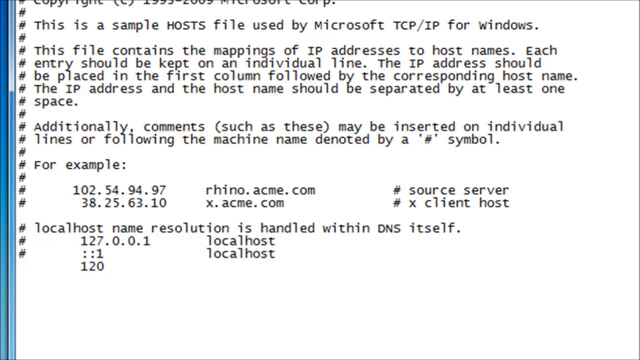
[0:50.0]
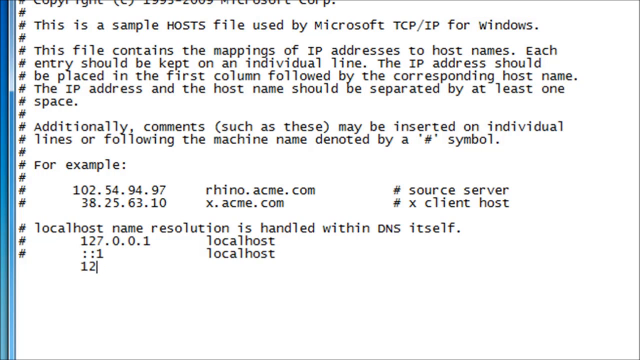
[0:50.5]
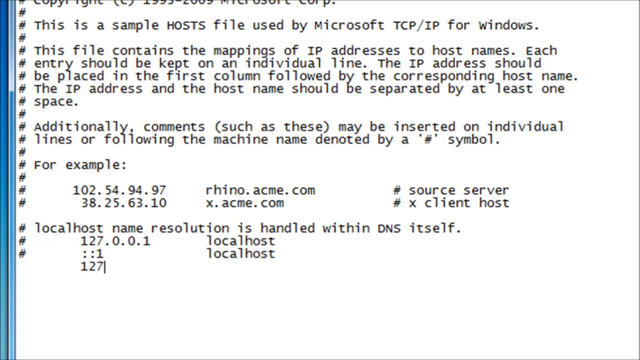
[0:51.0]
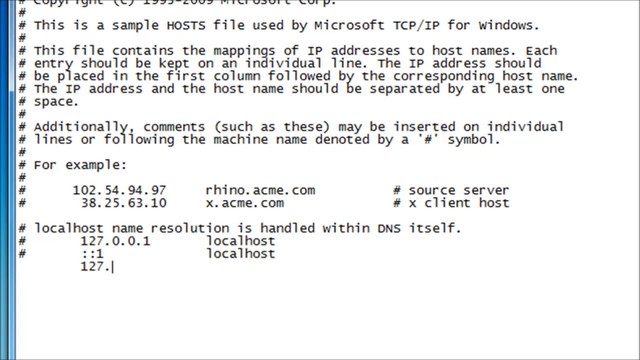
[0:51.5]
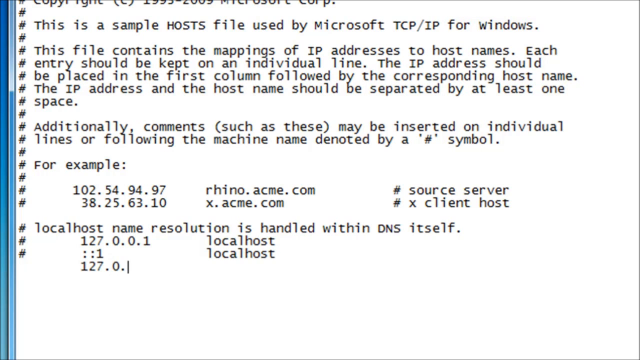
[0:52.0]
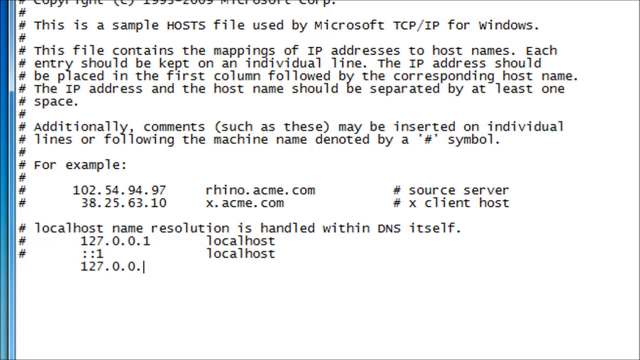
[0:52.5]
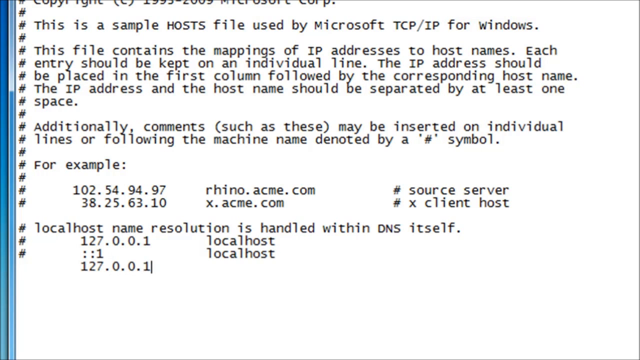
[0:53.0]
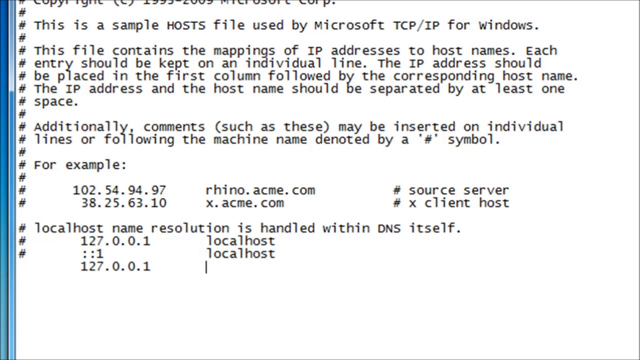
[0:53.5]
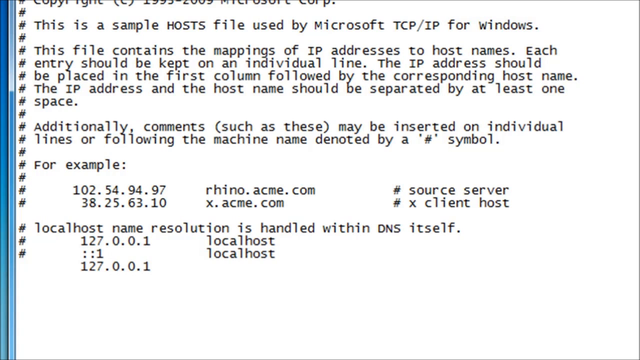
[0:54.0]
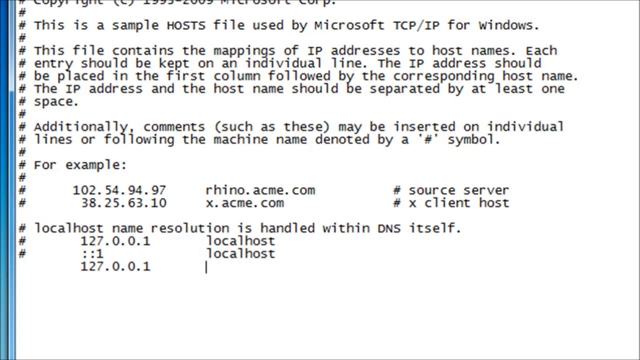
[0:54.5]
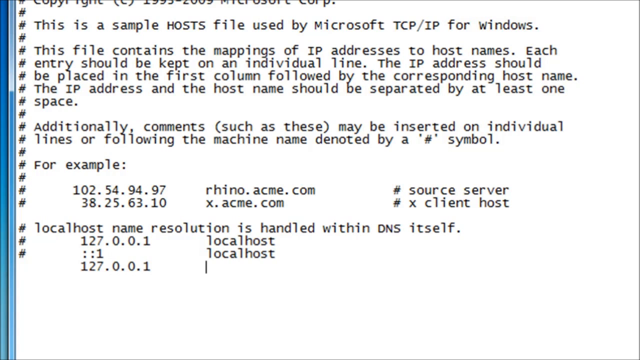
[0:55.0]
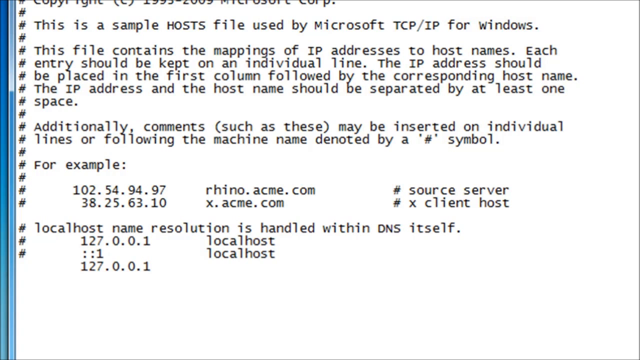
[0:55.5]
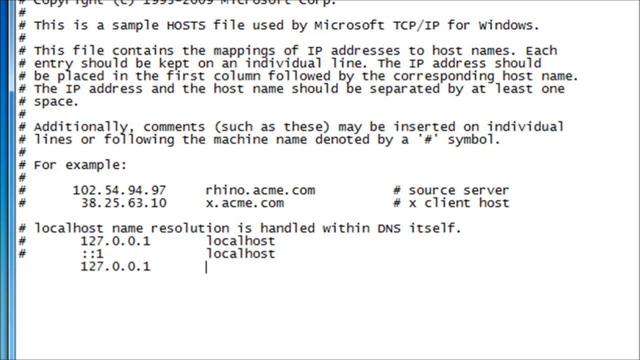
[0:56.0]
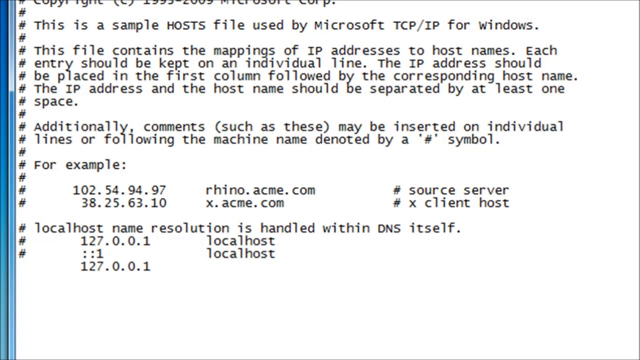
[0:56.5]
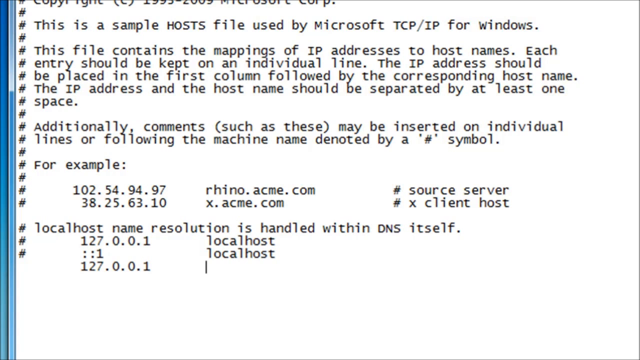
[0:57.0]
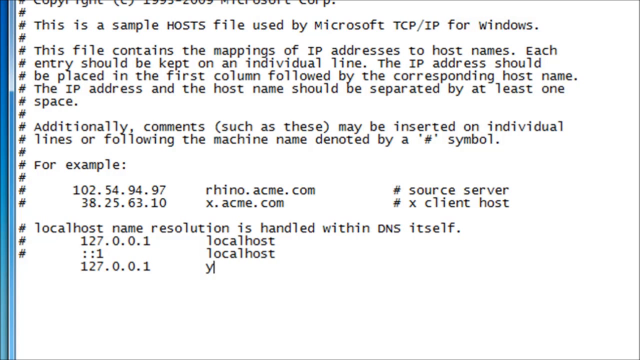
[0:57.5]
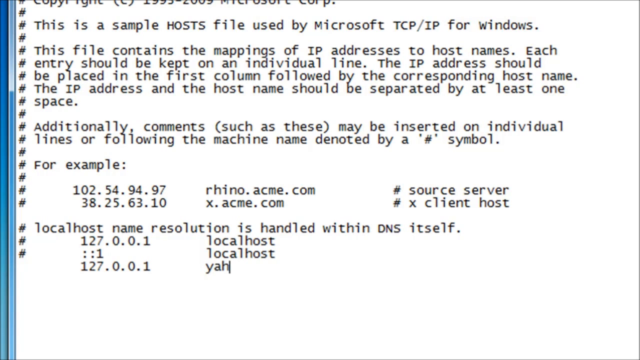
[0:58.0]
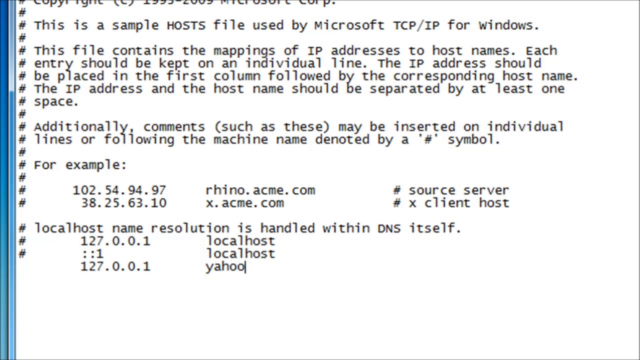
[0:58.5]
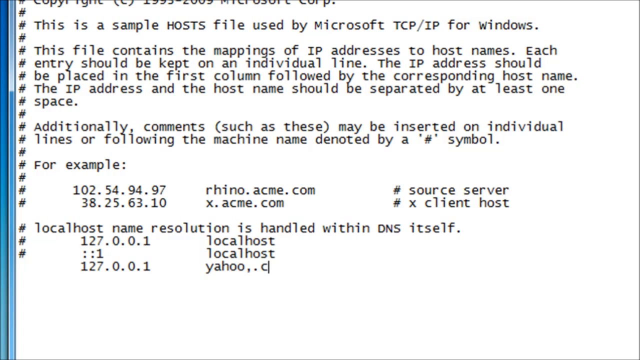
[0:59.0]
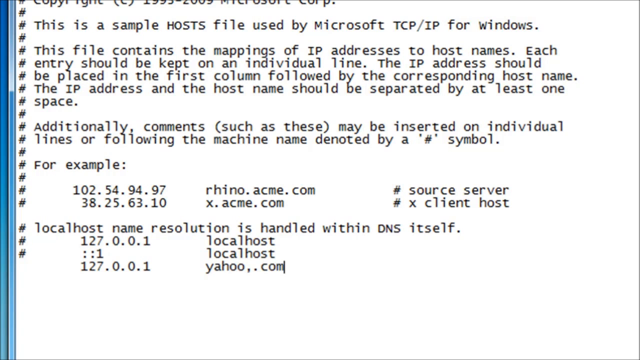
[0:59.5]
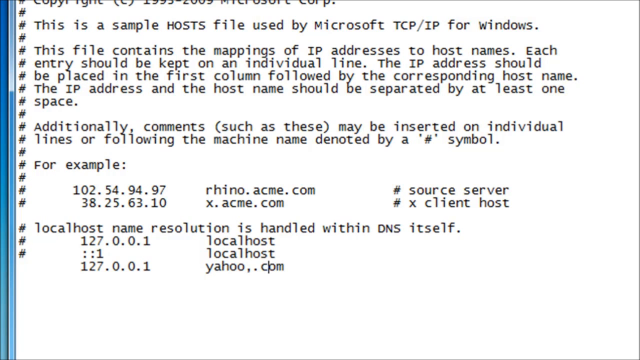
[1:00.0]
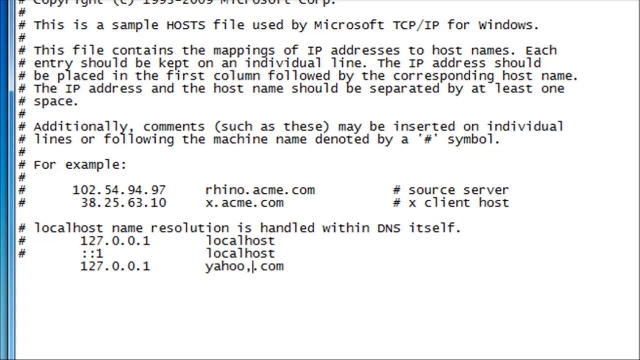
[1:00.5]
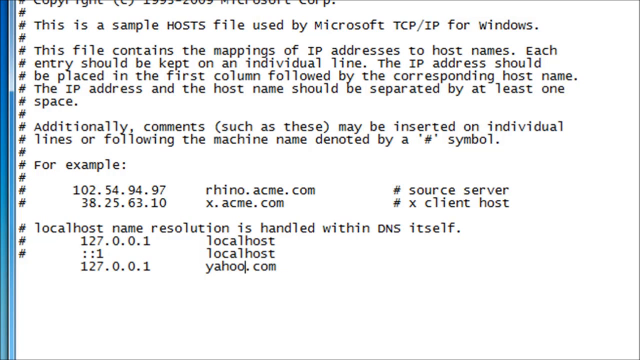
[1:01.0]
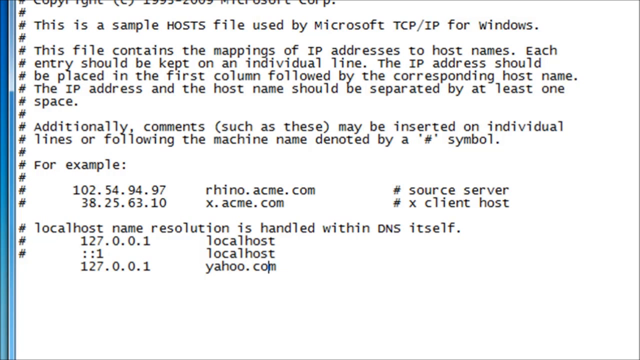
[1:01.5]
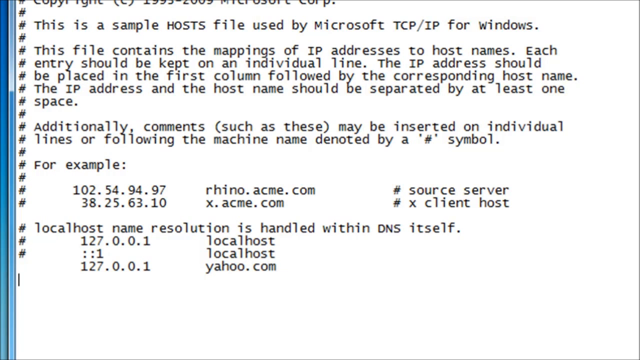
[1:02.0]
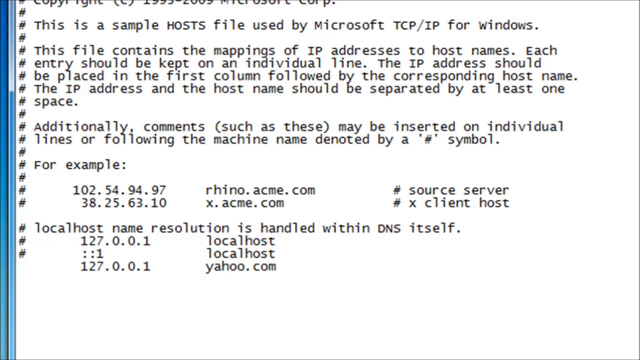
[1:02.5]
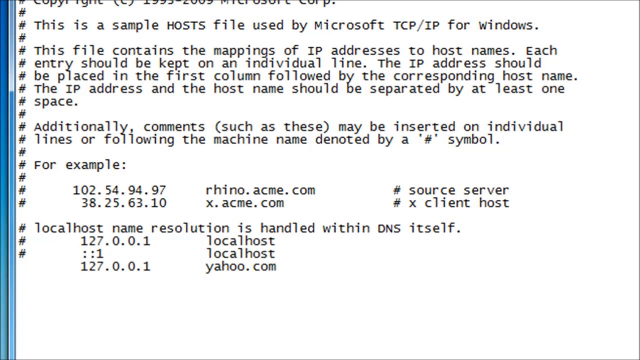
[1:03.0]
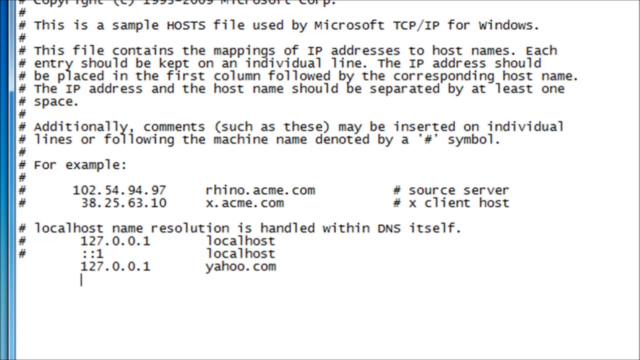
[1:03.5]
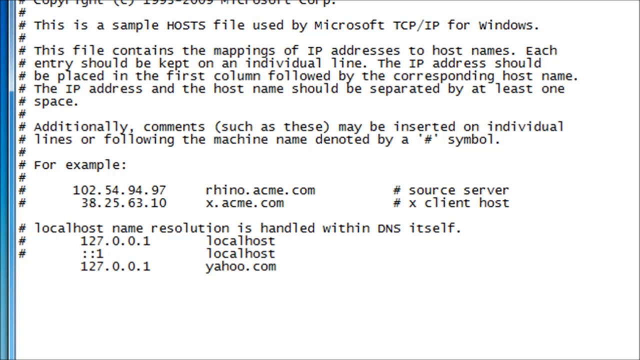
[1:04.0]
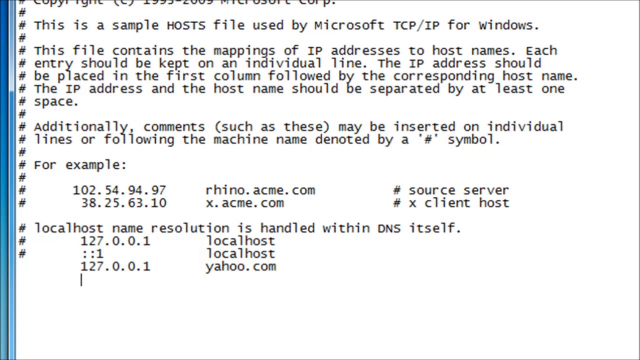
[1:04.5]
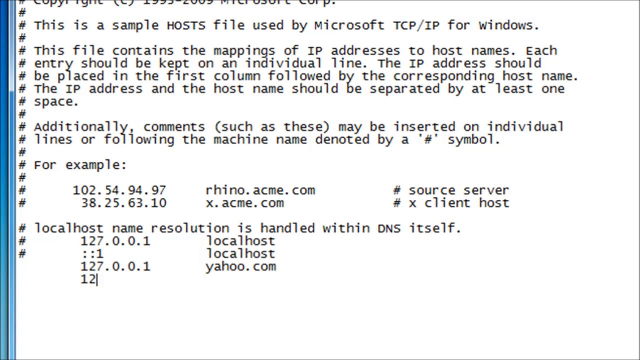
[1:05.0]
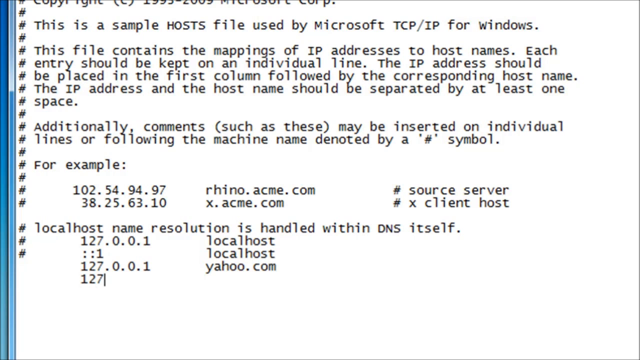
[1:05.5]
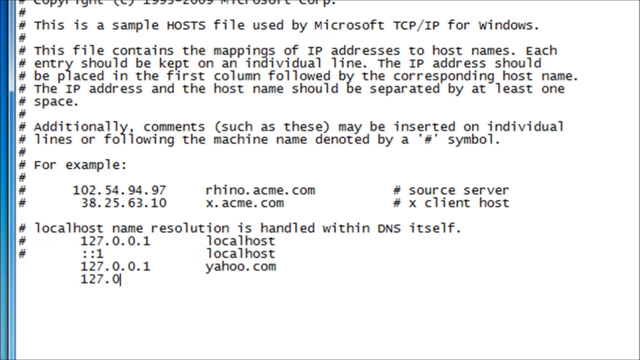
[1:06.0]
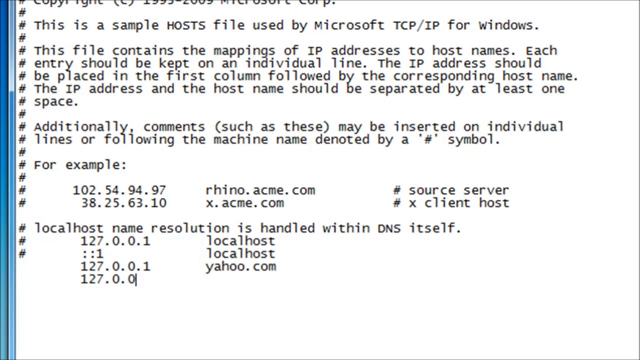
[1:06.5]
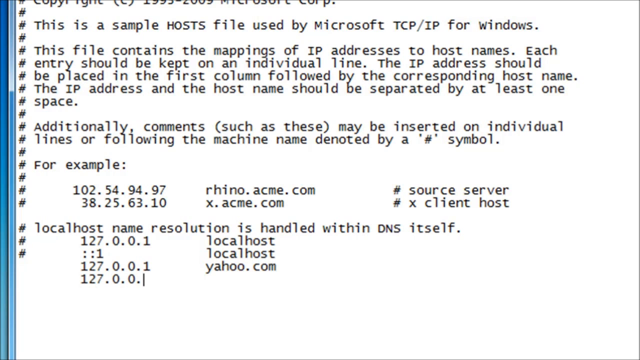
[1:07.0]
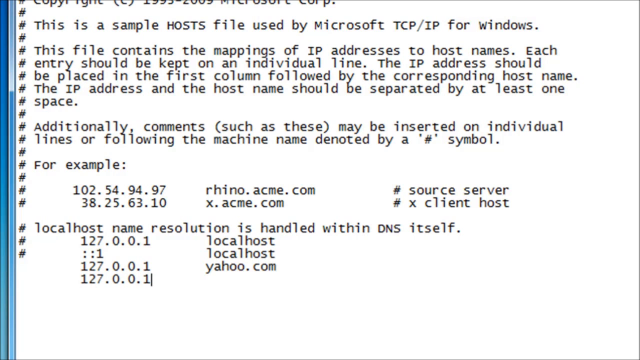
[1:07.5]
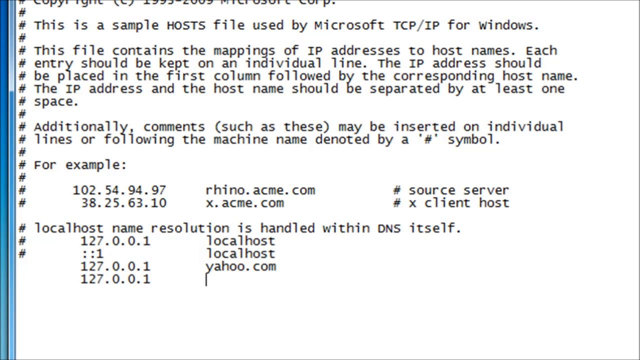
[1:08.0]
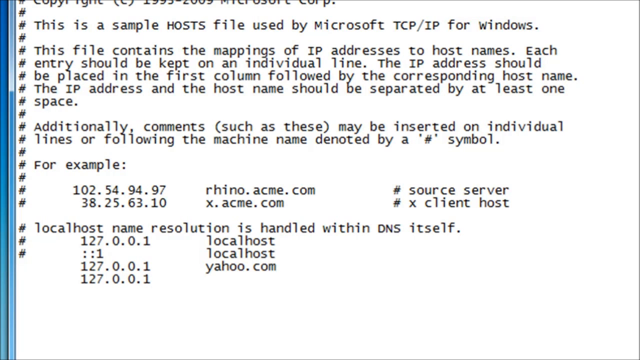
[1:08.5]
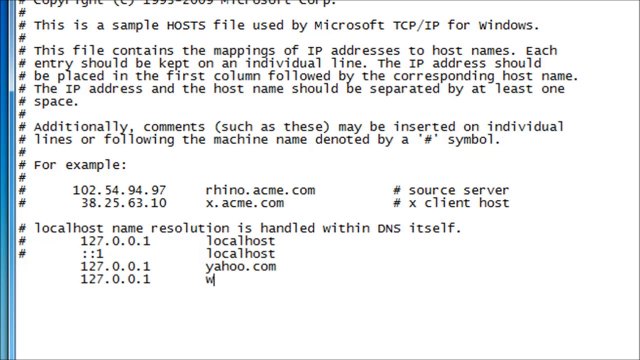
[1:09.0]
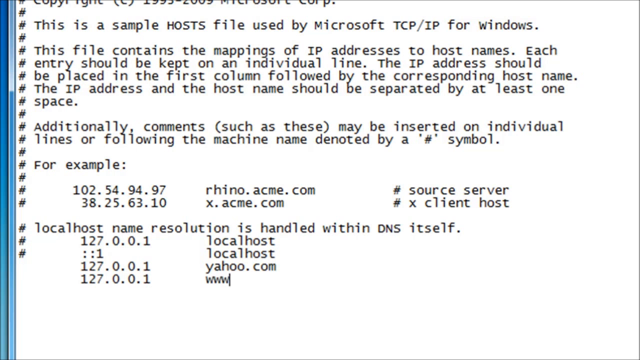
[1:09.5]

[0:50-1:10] The hosts file text is shown, reading "This file contains the mapping of IP address to host name. Each entry should be kept on an individual line. The IP address should be placed in the first column, followed by the corresponding host name. The IP address and the host name should be separated by at least one space." It gives examples including "102.54.94.97" and "38.25.63.10 x.acme.com". Below "Local host name resolution is handled within DNS itself" are the lines "127.0.0.1 local host" and "127.0.0.1 yahoo.com", followed by an incomplete last line, "127.0.0.1 www.", where the video cuts off.